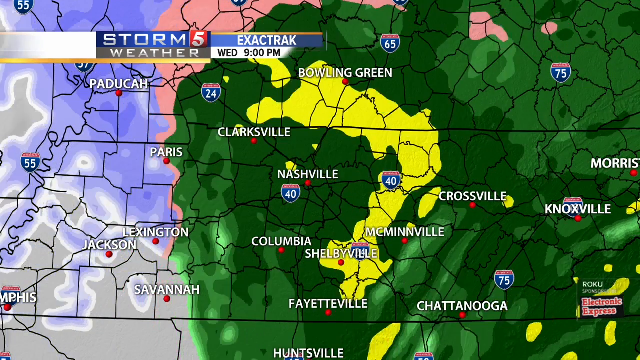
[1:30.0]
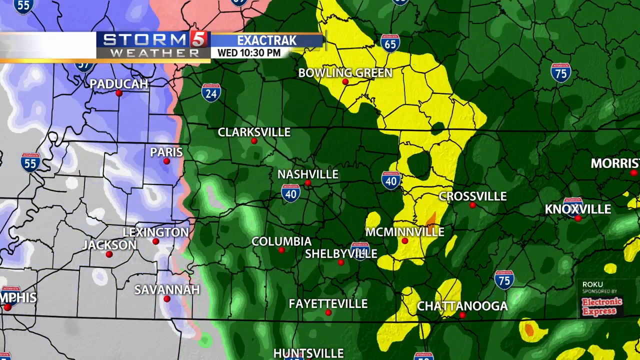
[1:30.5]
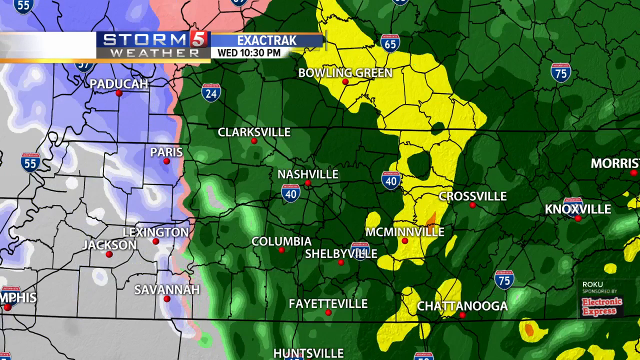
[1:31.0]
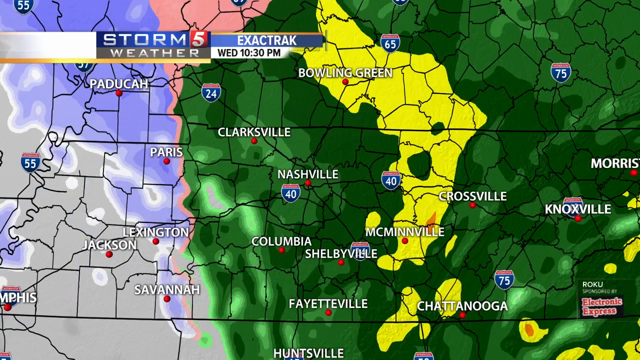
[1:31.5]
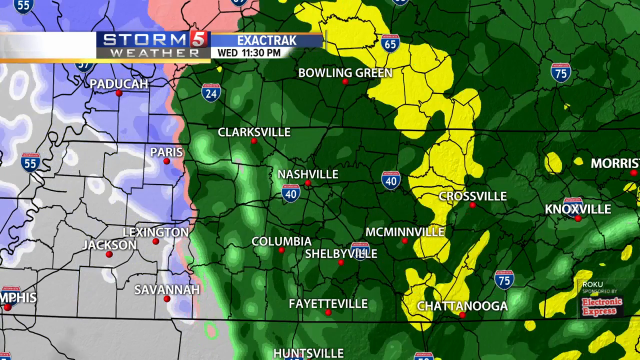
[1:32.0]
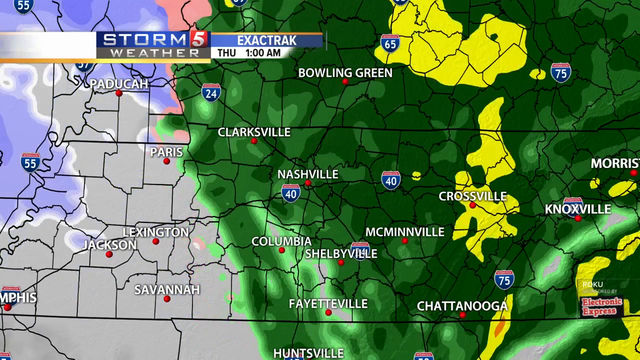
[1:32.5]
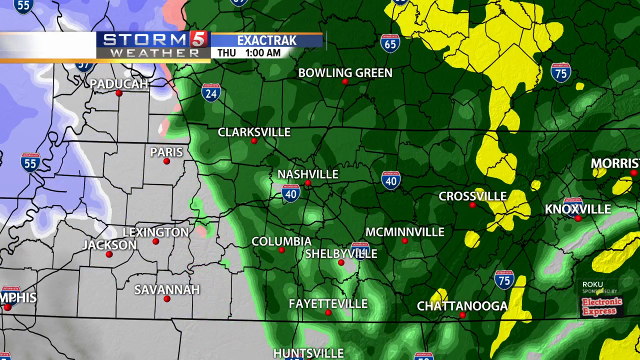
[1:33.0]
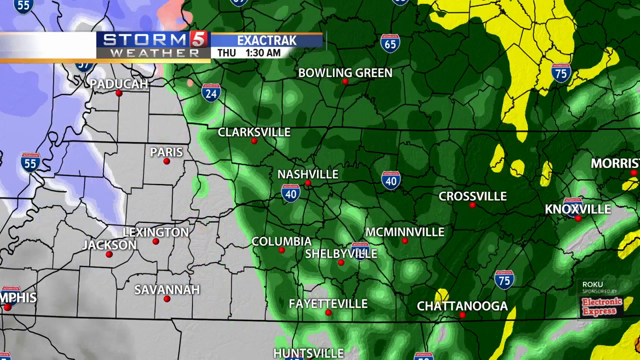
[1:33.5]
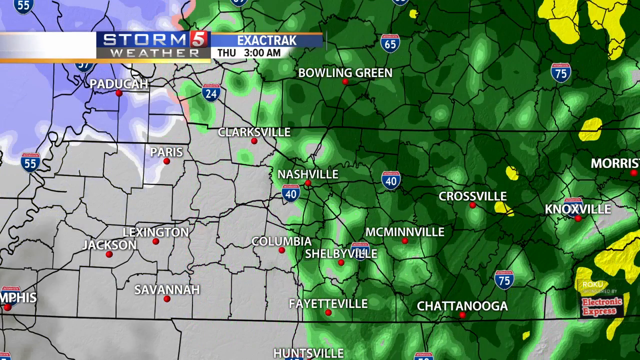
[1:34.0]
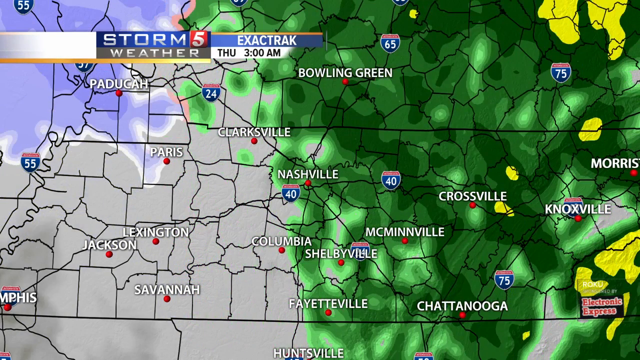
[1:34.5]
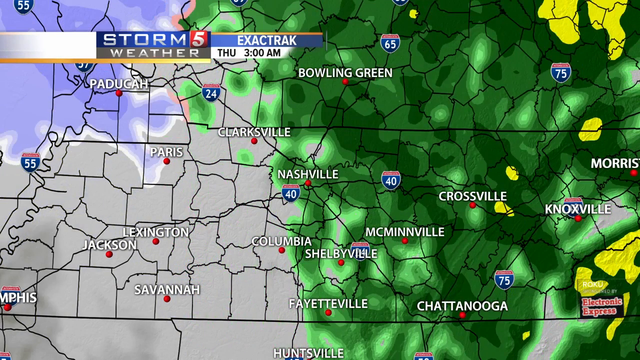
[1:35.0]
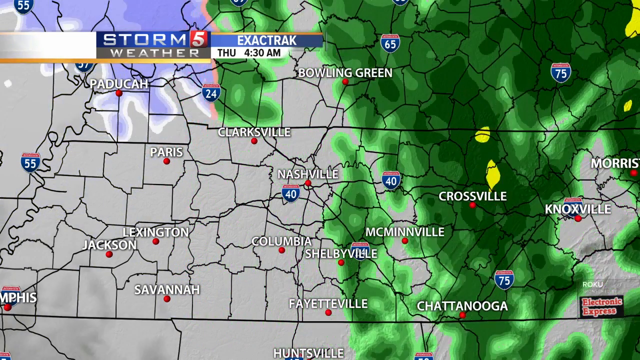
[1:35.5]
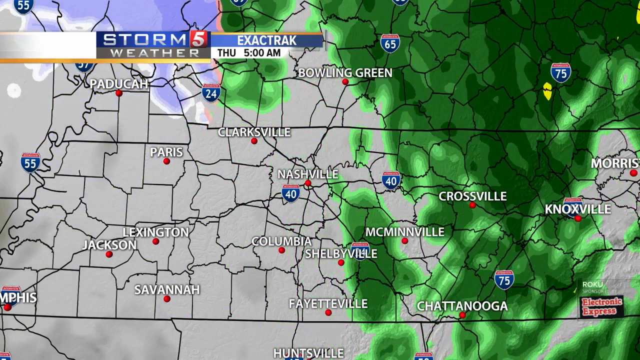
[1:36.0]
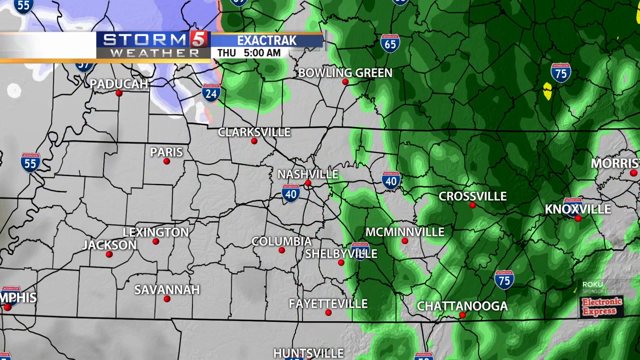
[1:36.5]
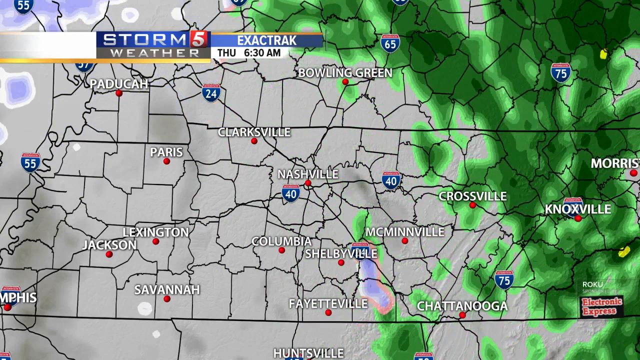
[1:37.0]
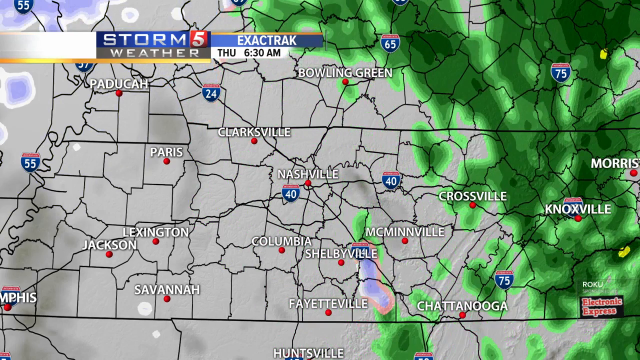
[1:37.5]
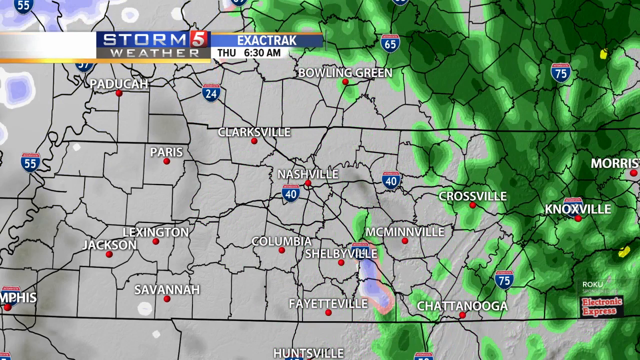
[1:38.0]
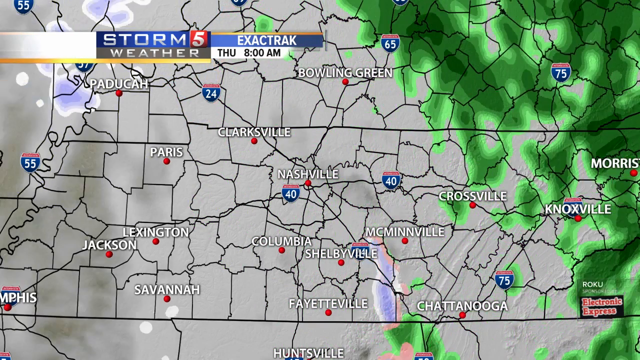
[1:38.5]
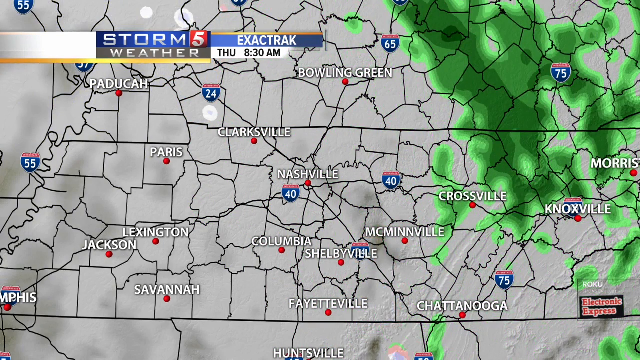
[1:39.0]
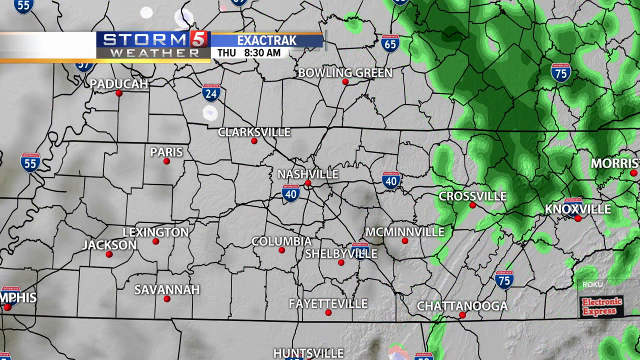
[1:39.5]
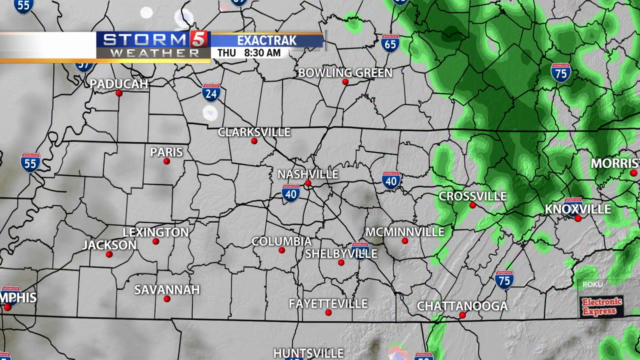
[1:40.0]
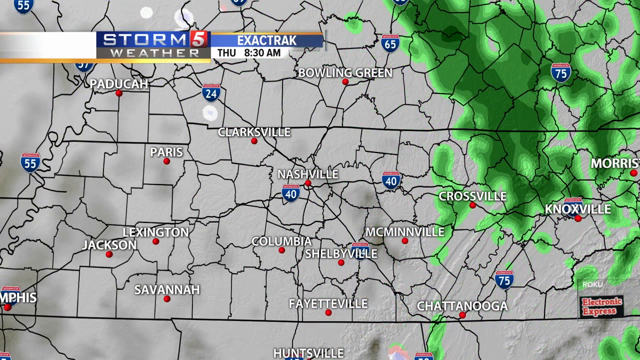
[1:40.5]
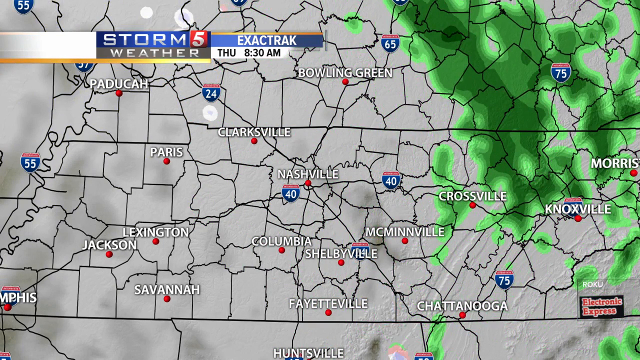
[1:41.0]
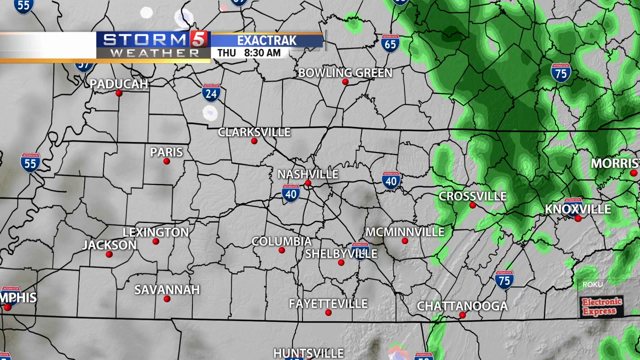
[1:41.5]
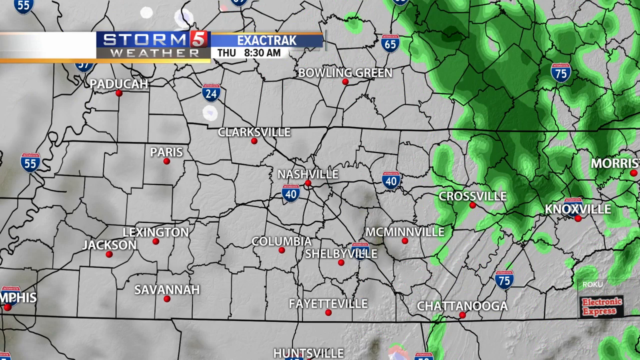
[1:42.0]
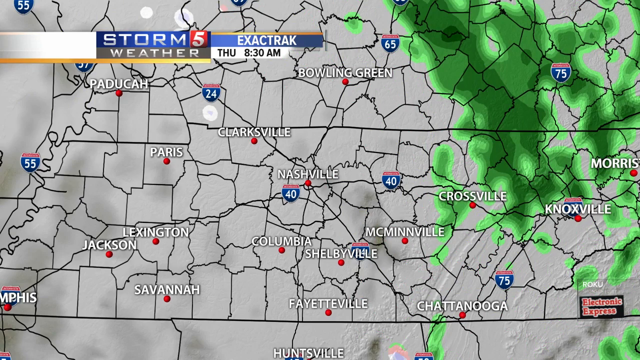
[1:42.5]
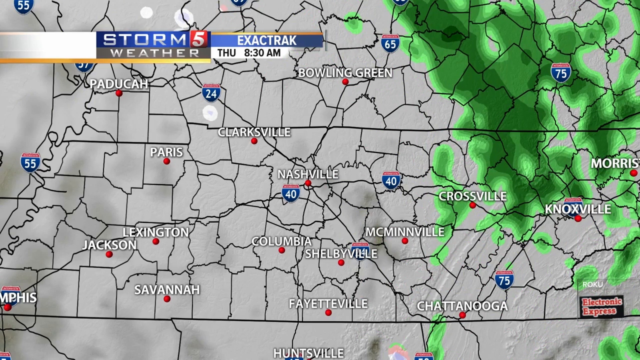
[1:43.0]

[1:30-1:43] The camera zooms in on the satellite view, focusing on the area. The whole area is covered in green and dark green, with purplish color on the other side and other areas covered in grayish color; the meaning of the colors is unclear. Areas such as Columbia, Sheppardville, Fayetteville and Jackson are covered in grayish color. Yellow spots and some pinkish color appear in some areas. Three types of green are visible: lime green, light green and dark green. Yellow also appears in areas such as Crossville and Bowling Green.